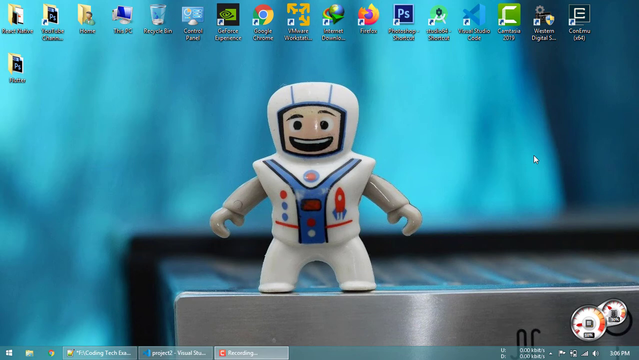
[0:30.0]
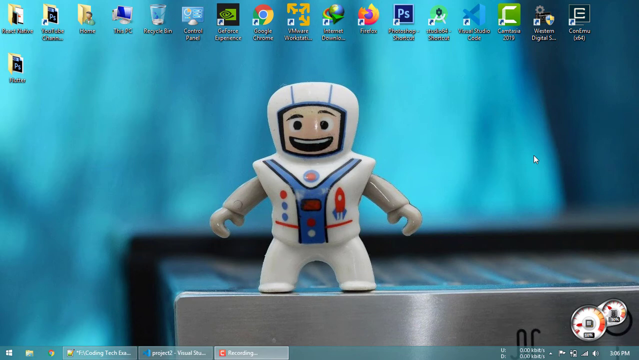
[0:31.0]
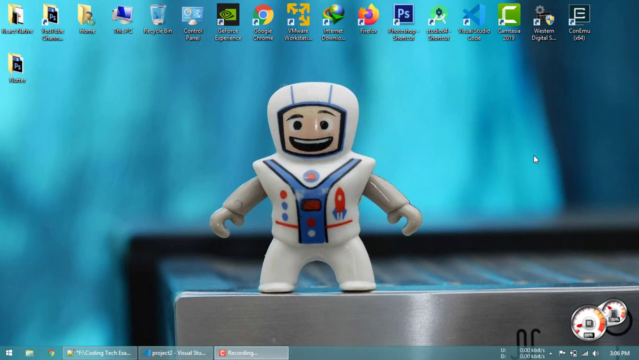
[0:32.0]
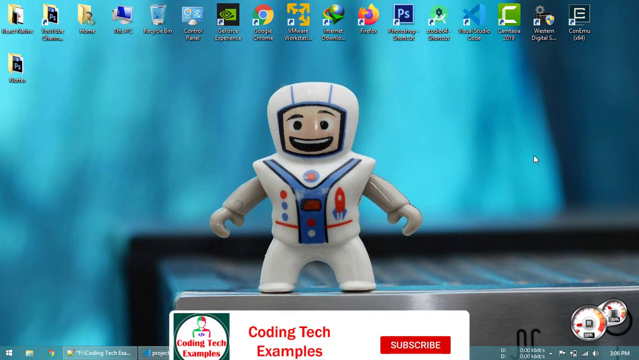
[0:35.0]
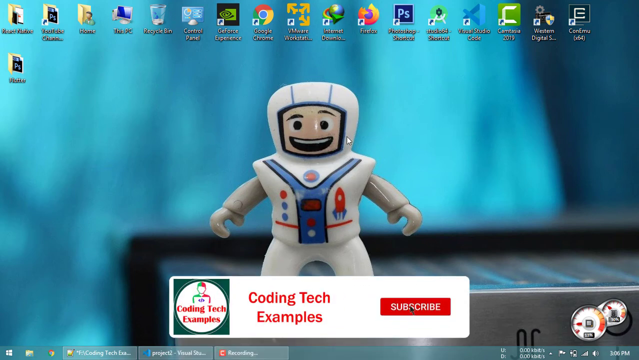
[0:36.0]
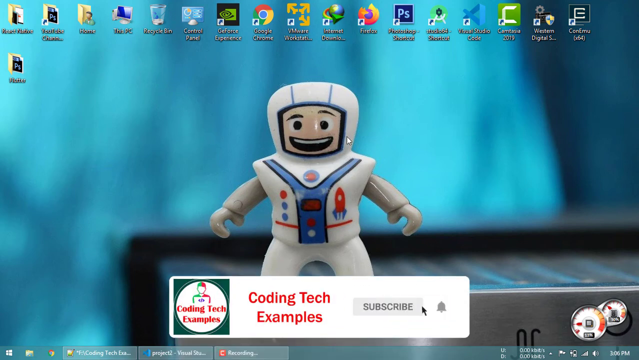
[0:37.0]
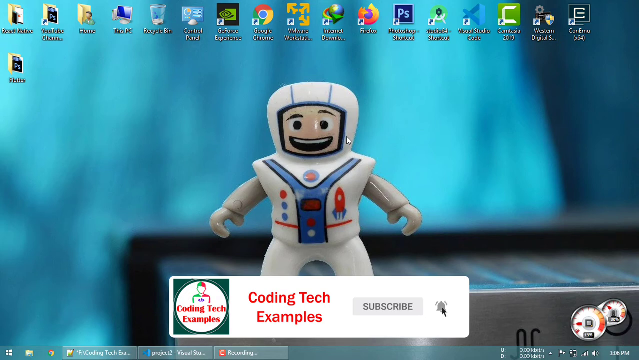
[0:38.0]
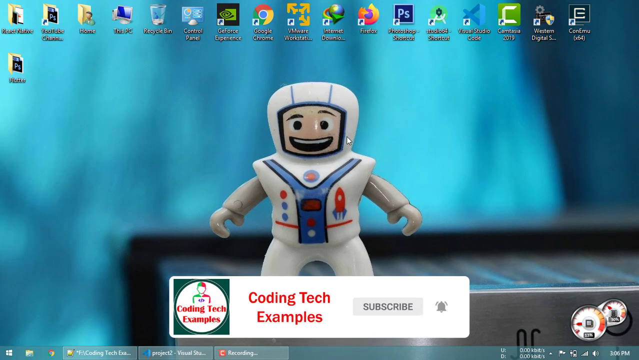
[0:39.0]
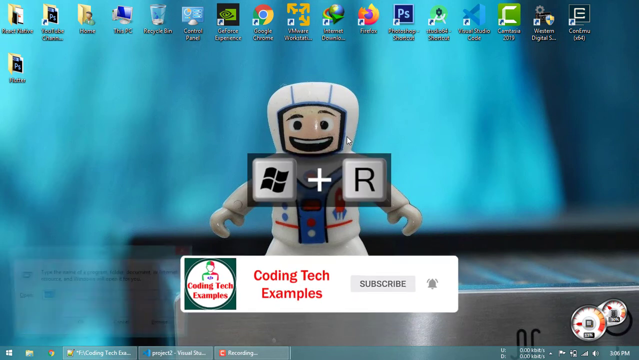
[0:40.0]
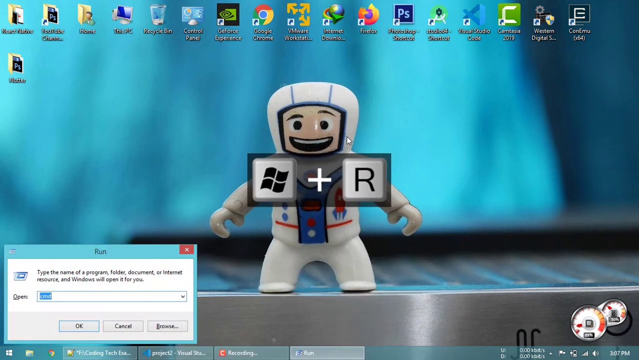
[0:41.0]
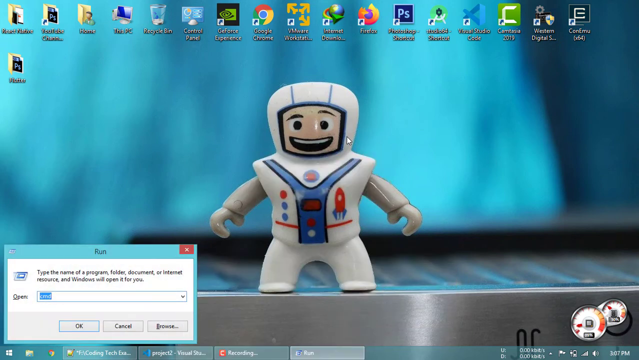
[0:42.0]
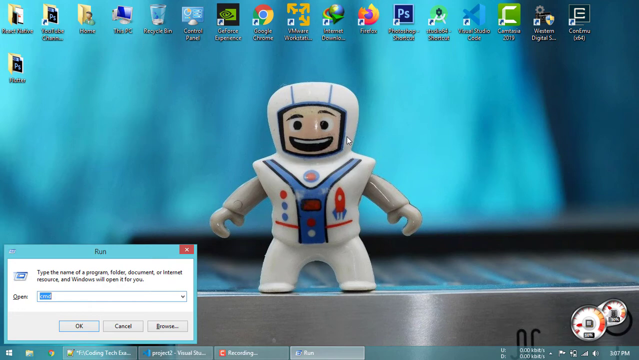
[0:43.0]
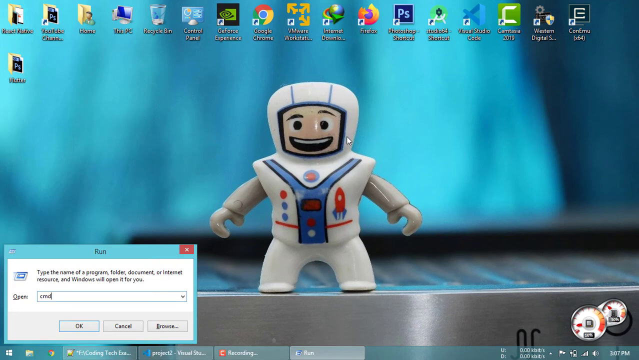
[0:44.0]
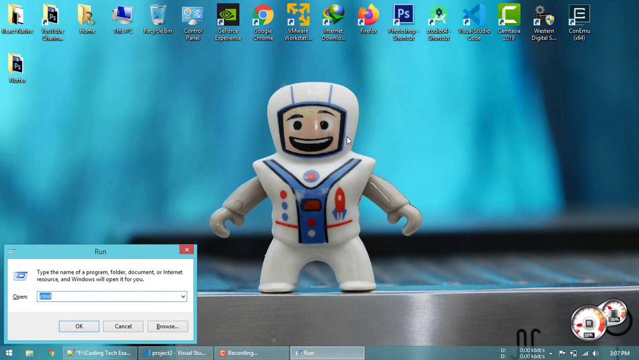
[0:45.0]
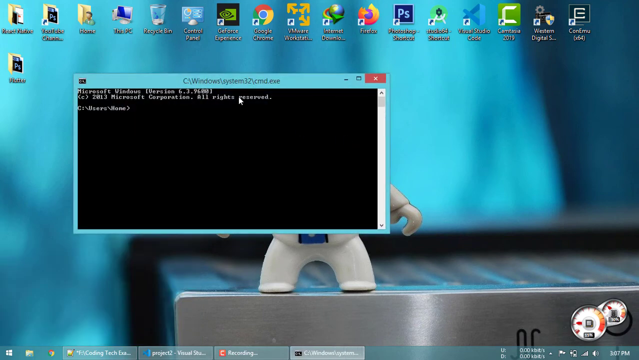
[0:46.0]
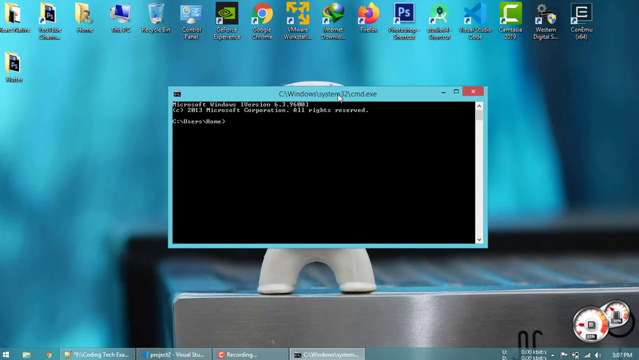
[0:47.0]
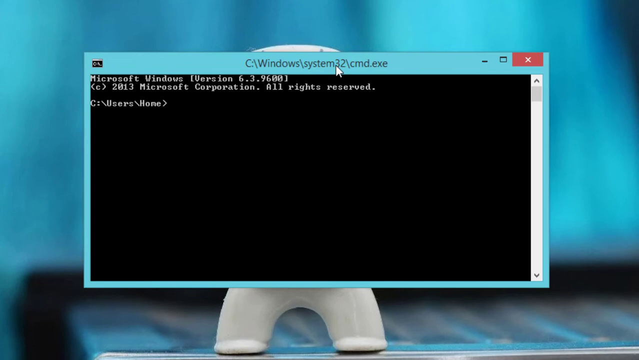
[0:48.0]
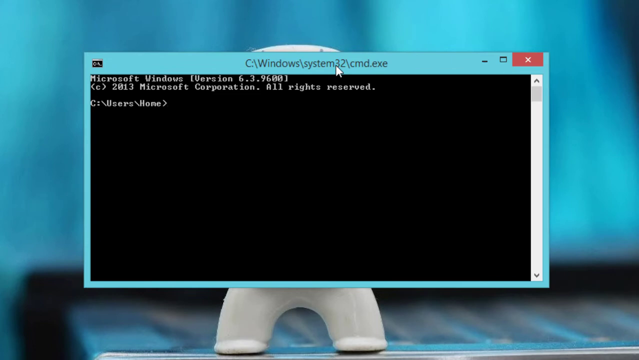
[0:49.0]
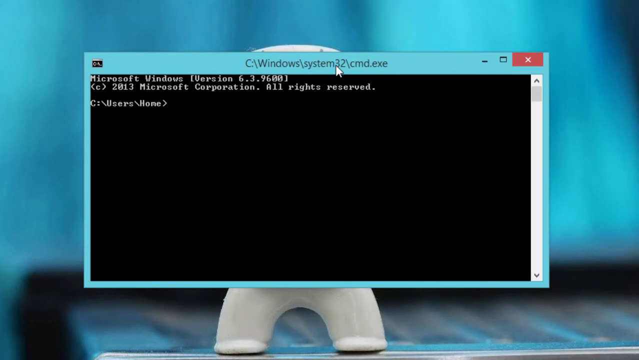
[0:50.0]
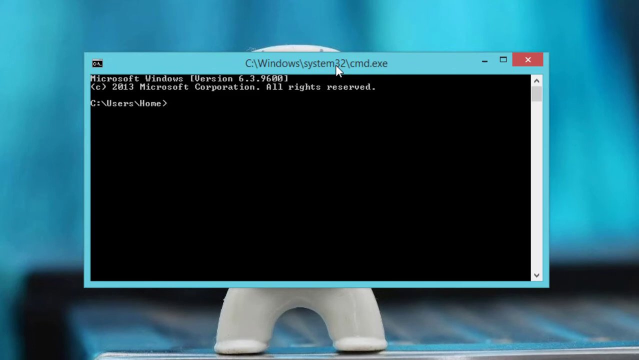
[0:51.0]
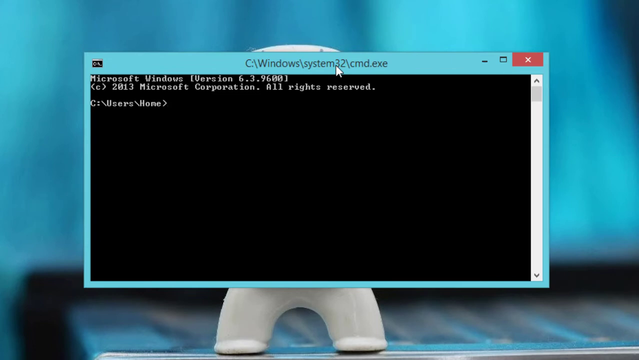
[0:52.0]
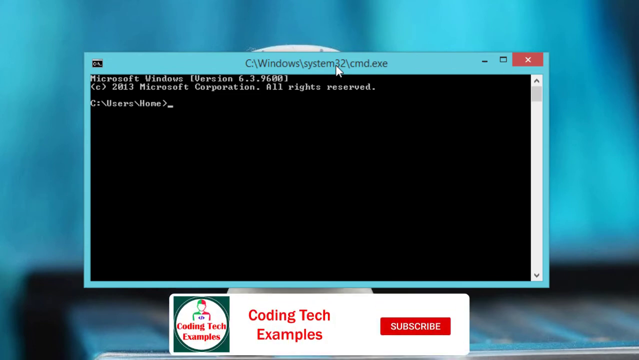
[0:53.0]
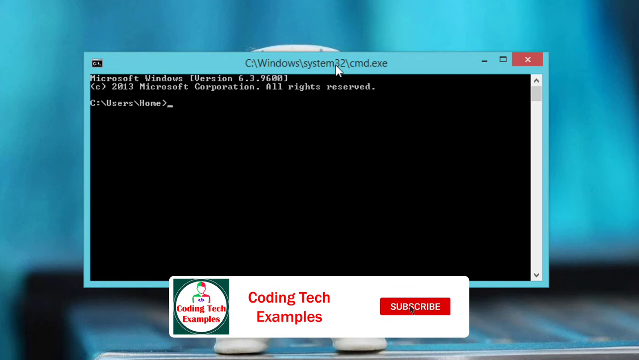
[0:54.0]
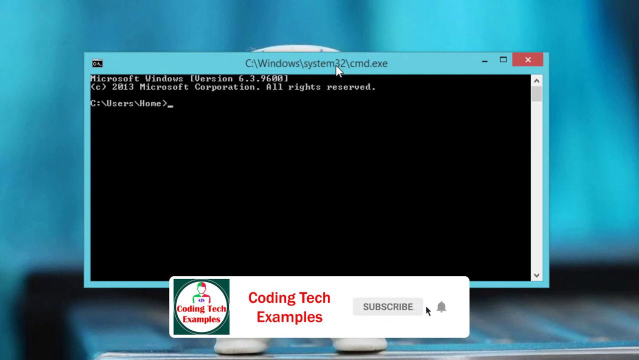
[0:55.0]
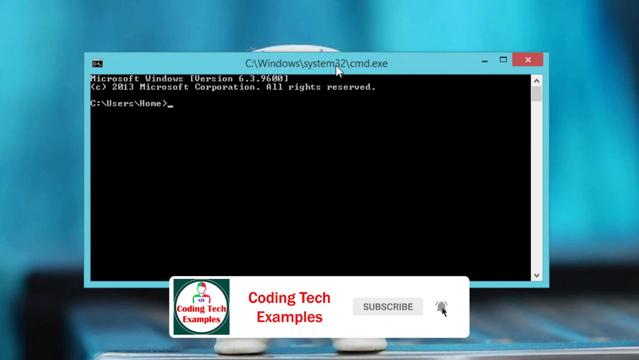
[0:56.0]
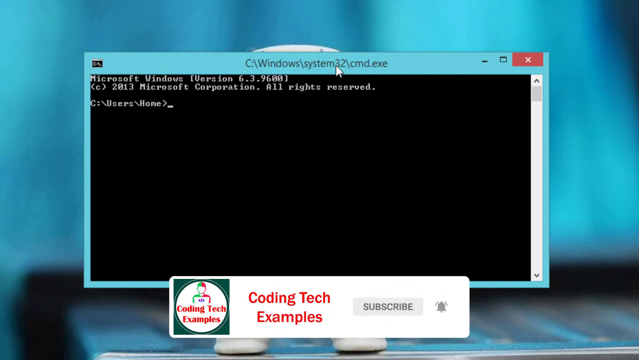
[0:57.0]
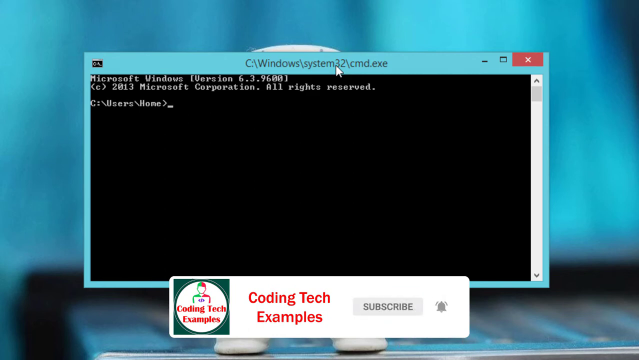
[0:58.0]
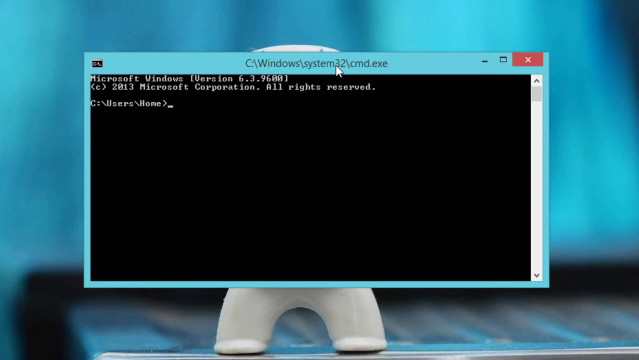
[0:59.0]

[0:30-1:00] A window opens with the text "Type the name of the program" for a document or internet resource, and Windows will open it. Then a window shows Microsoft Windows version 6.3.9600, 2013 Microsoft Corporation, all rights reserved, and the user home. The view then returns to the desktop wallpaper with the image of the toy in a ninja outfit and the 18 folders above it. The words "coding text examples" appear again, along with a YouTube subscribe logo and a follow logo. The toy is smiling with its arms open to the sides.